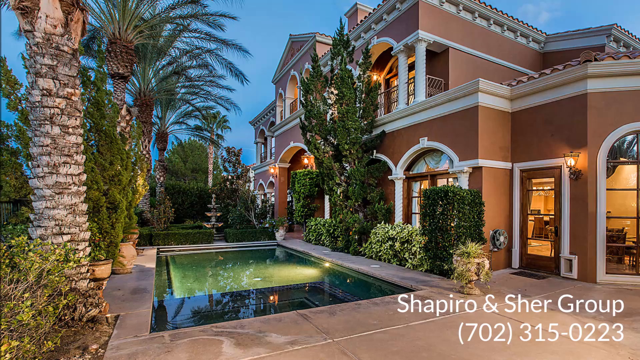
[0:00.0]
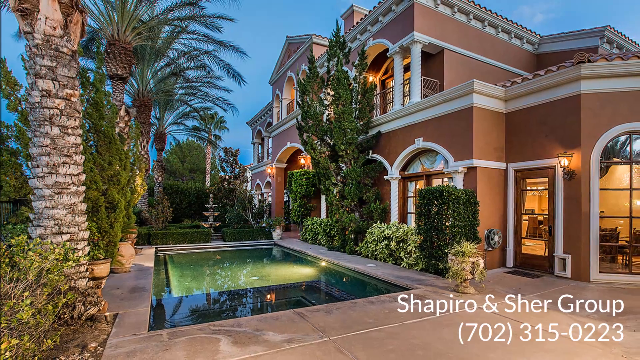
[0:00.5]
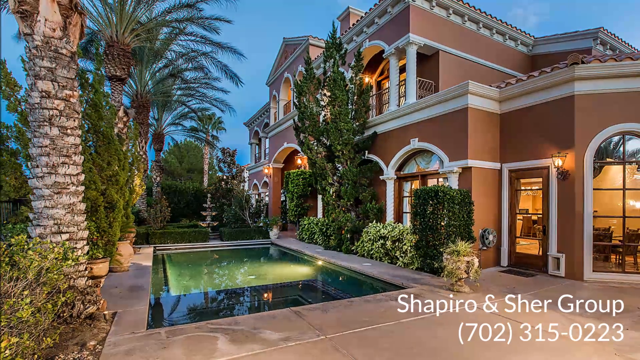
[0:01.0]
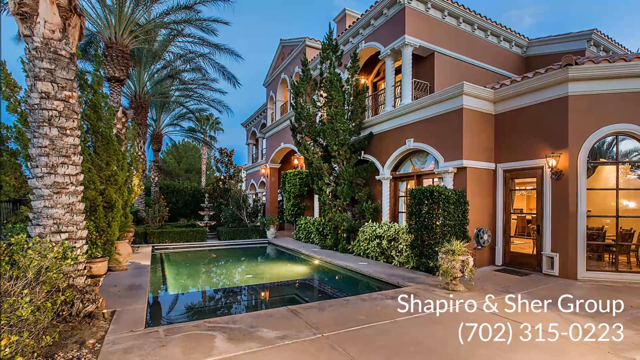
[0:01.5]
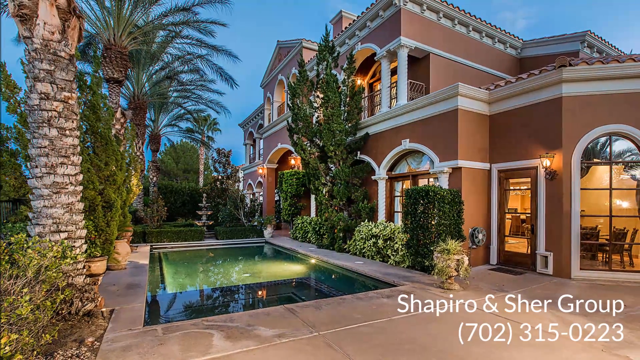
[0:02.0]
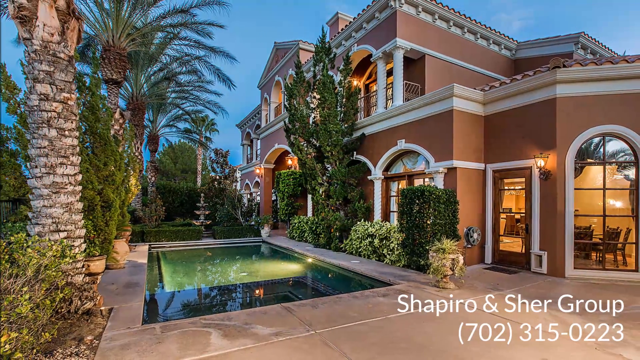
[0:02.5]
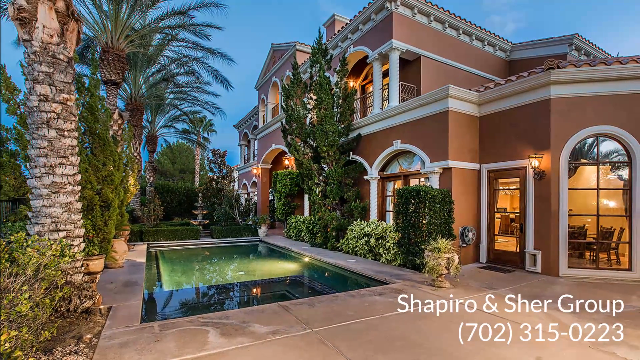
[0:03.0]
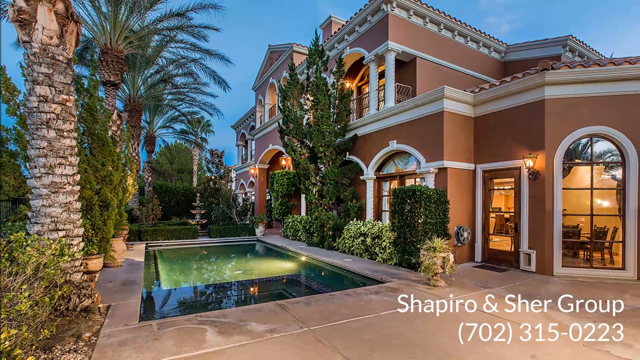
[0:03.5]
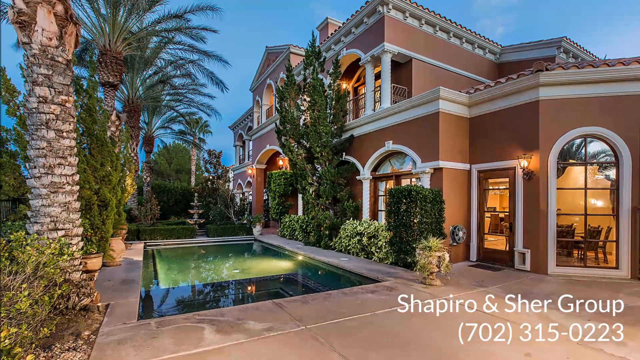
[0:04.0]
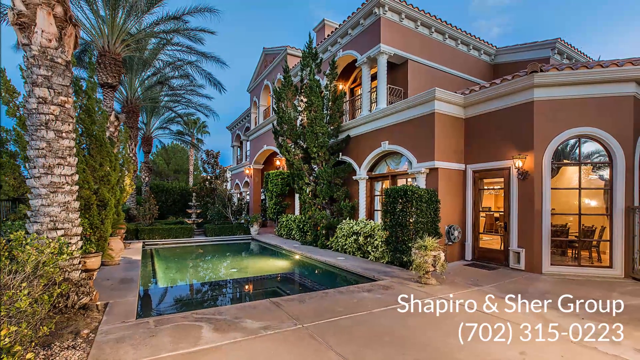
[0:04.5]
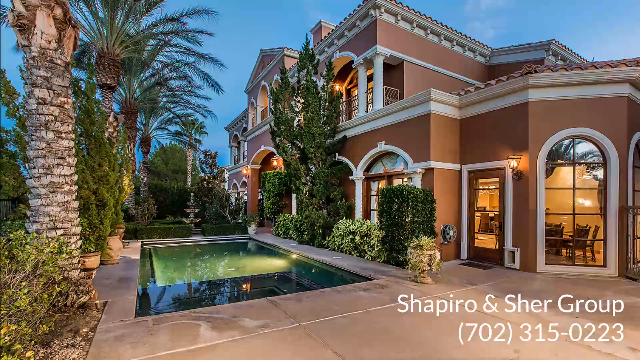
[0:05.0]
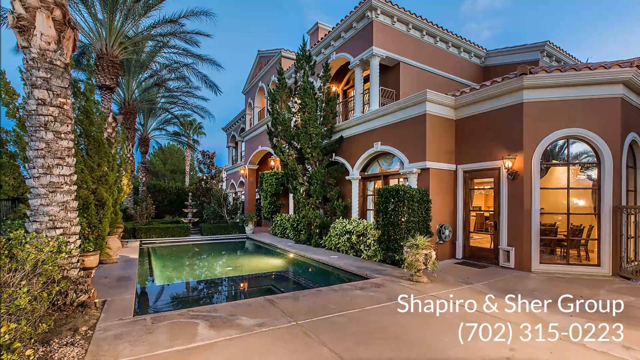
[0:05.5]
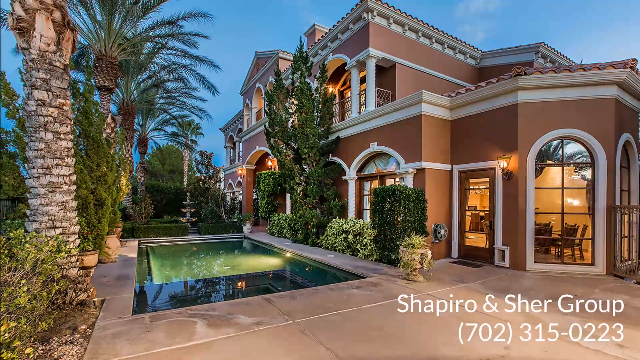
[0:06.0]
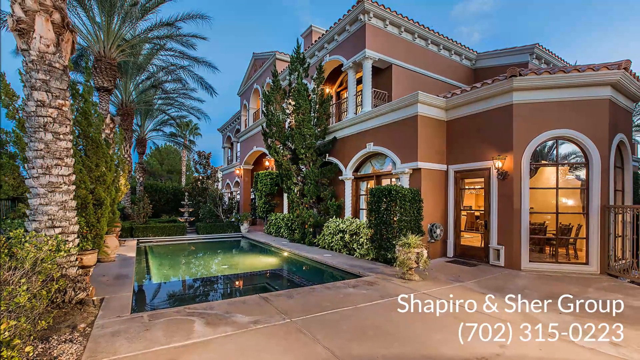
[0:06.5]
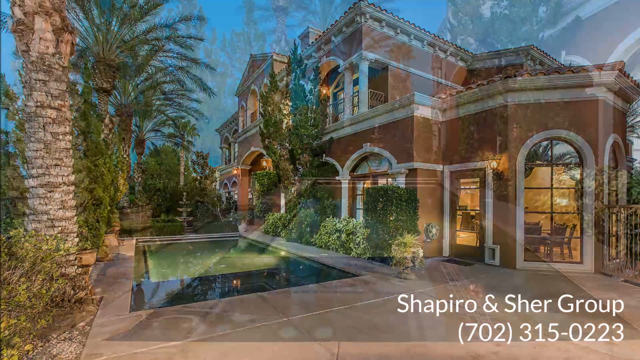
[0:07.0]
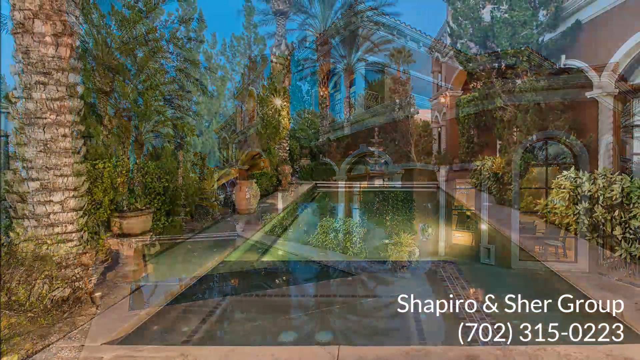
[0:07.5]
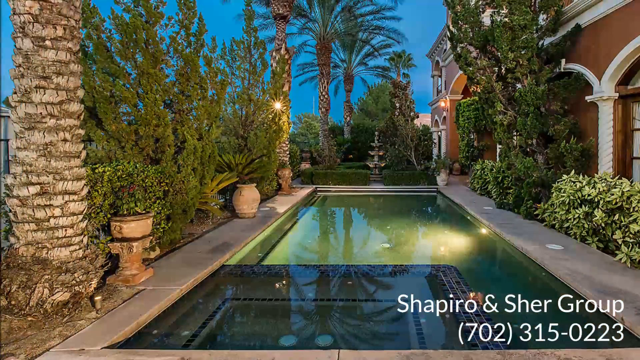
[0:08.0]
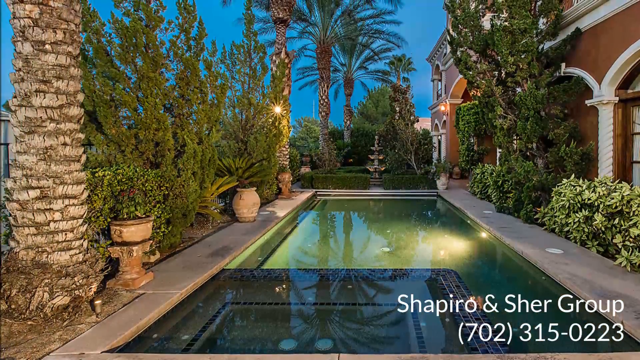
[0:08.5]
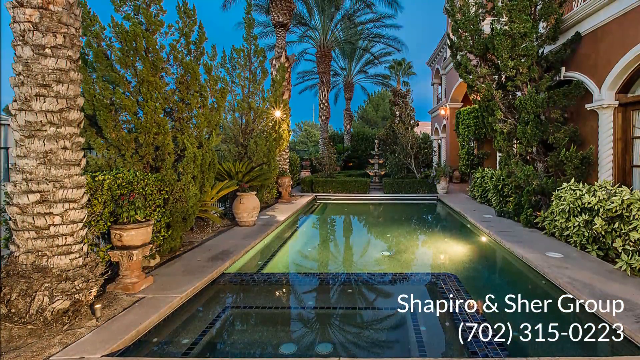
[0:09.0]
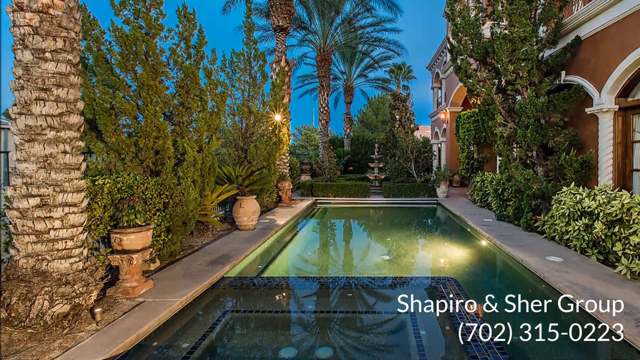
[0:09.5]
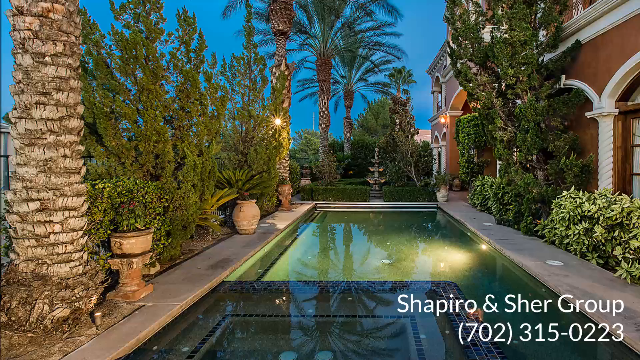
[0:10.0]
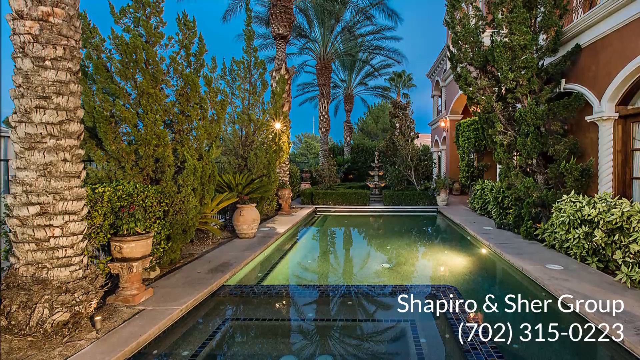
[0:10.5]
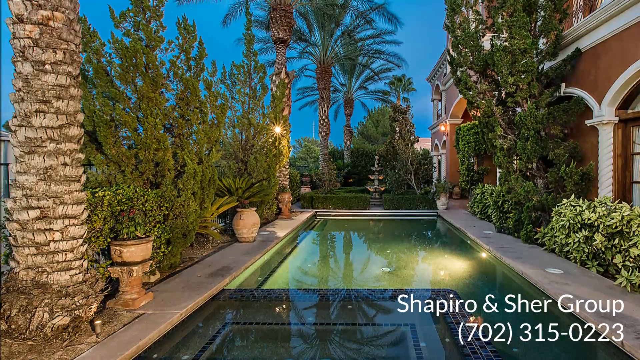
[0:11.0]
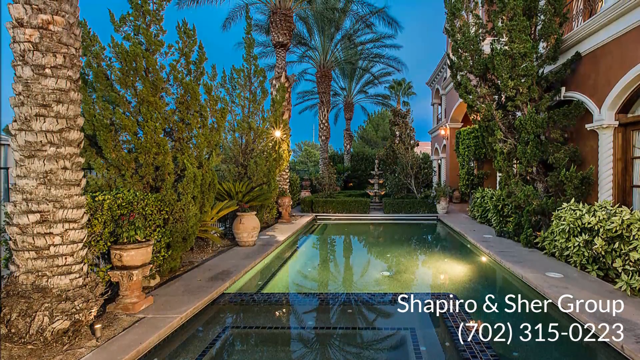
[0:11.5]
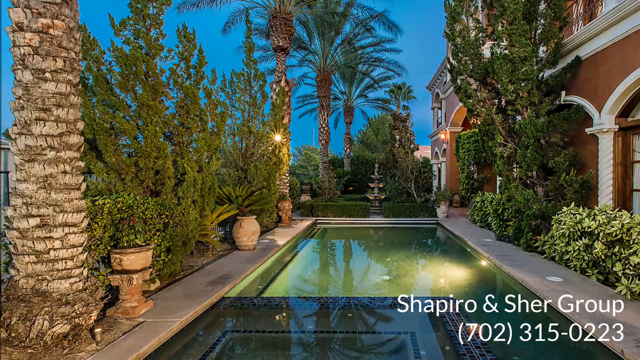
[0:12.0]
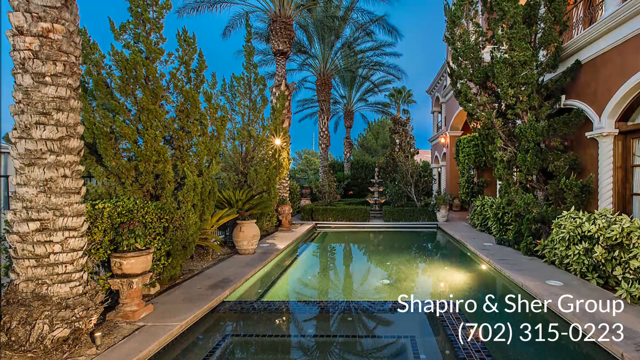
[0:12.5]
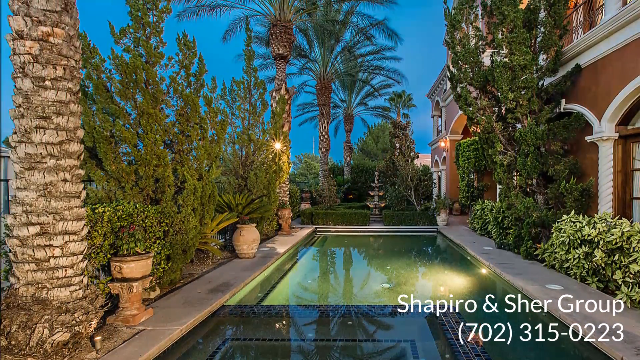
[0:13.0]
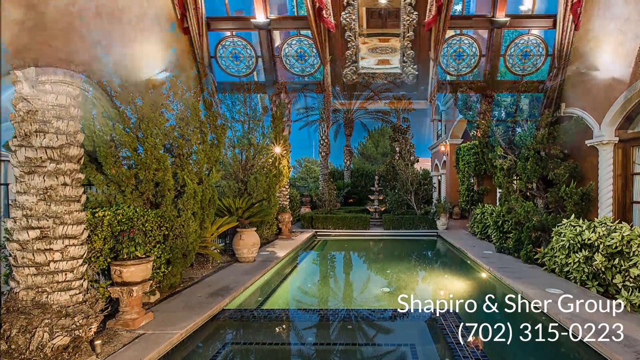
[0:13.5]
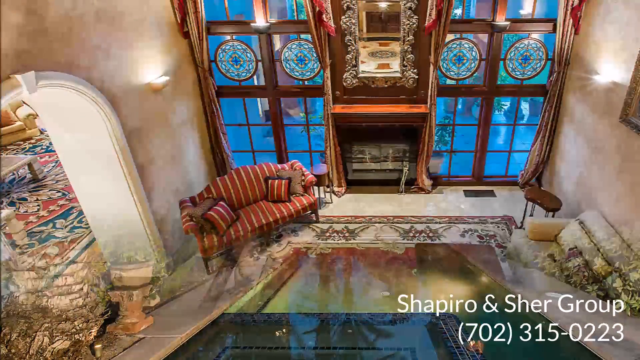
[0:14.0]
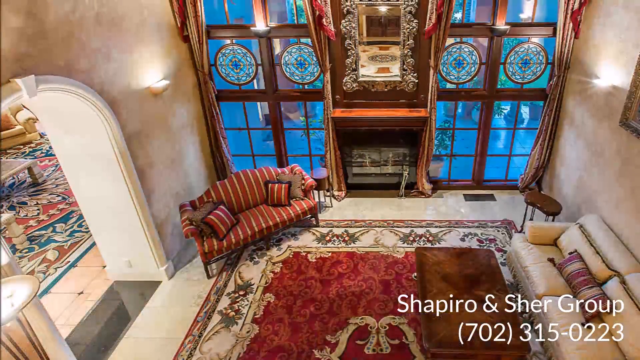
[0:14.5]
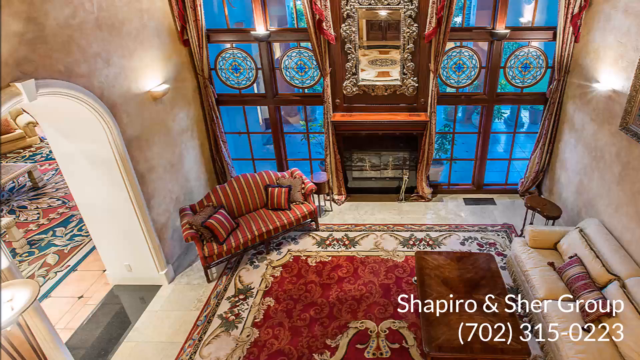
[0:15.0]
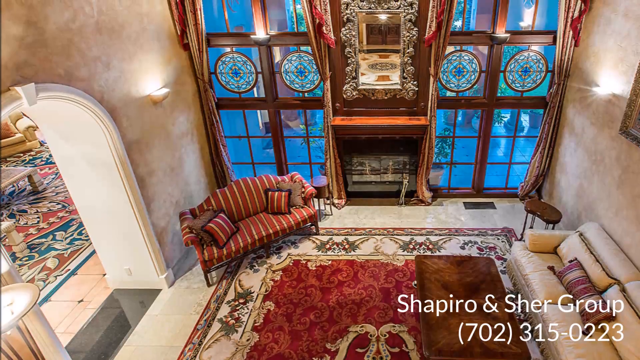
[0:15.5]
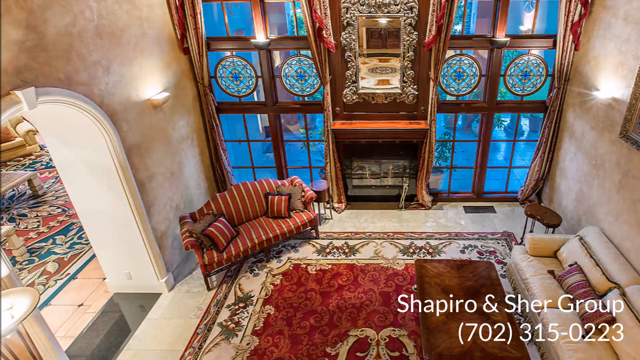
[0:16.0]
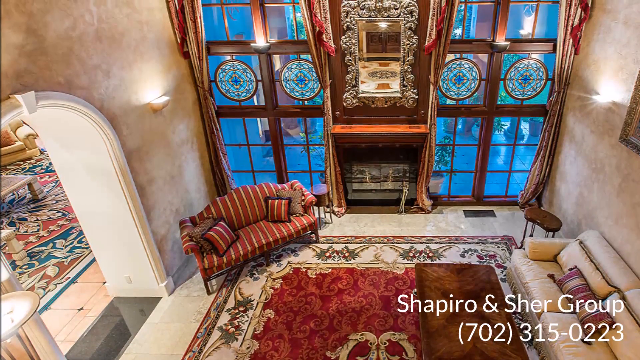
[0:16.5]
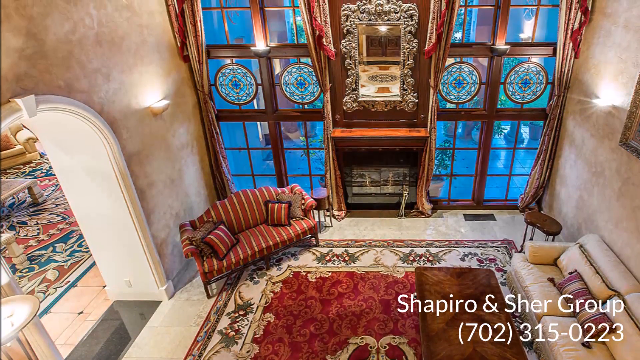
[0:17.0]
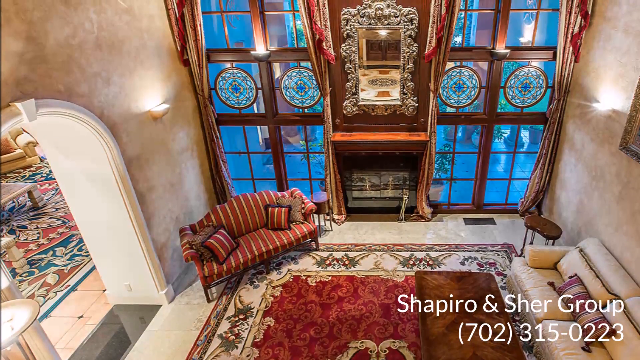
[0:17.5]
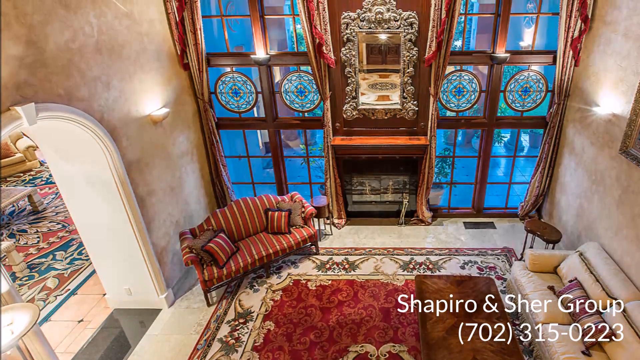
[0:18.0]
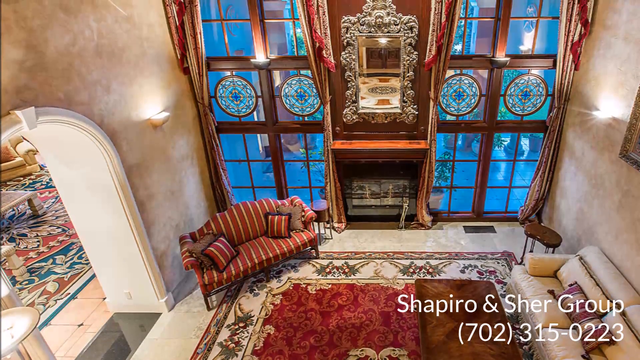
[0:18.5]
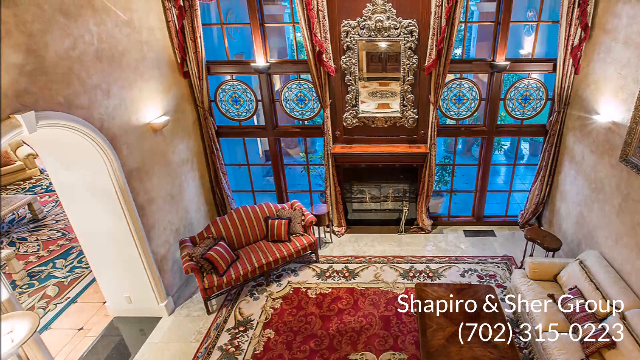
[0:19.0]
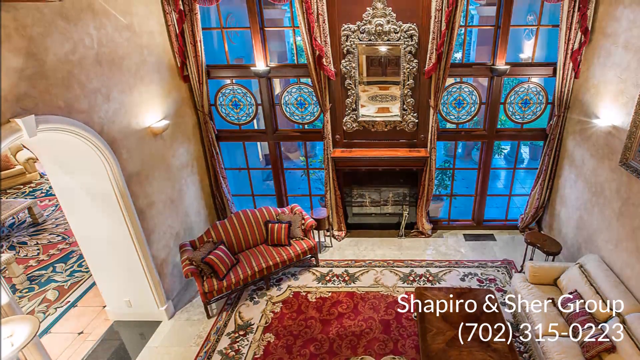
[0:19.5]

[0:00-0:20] A very large house, apparently, appears on the right side of the frame; it is brown and white. To the left are a lot of palm trees, and in the middle there is a pool. In the bottom right corner the name "Shapiro" is visible, and a telephone number appears at the bottom. It looks like a real estate advertisement. The scene changes to another view of the same pool, which is down below in the middle. Palm trees are visible off in the distance, with a palm tree close by on the left side; a row of palm trees on the left goes down into the background, and the house is on the right side. A tree and a green bush are next to the house on the right. The scene then changes to one of the inside rooms of the house, which looks like some sort of guest room or living room. In front are two very large windows, with what looks like a mirror in the middle and some sort of wooden structure in the middle. There is a couch to the left and another couch to the right, along with a coffee table, and to the far left there is an opening into another room.